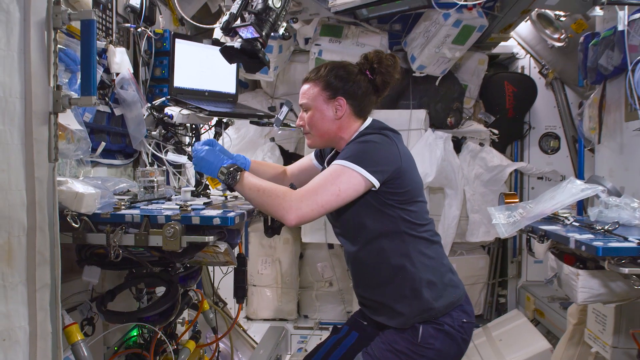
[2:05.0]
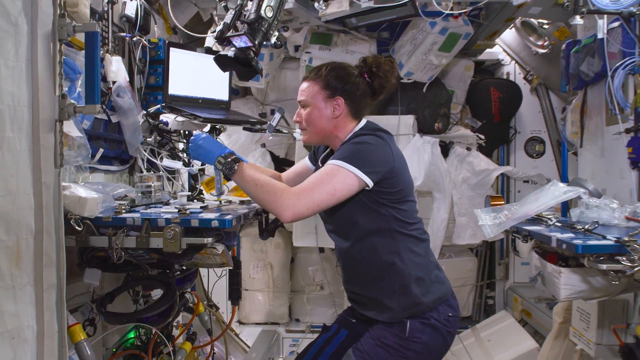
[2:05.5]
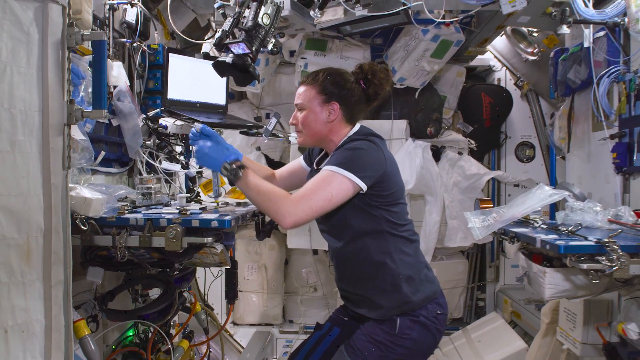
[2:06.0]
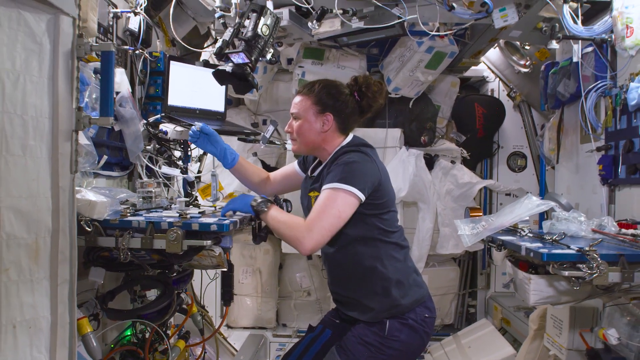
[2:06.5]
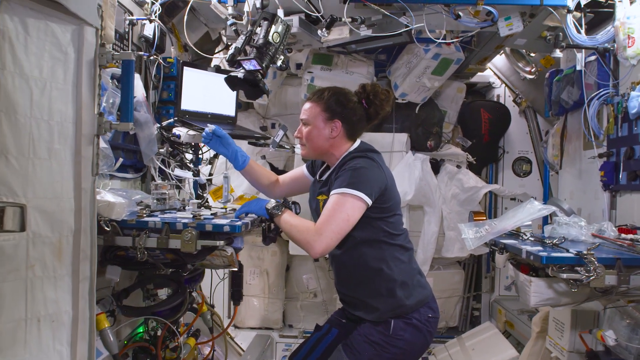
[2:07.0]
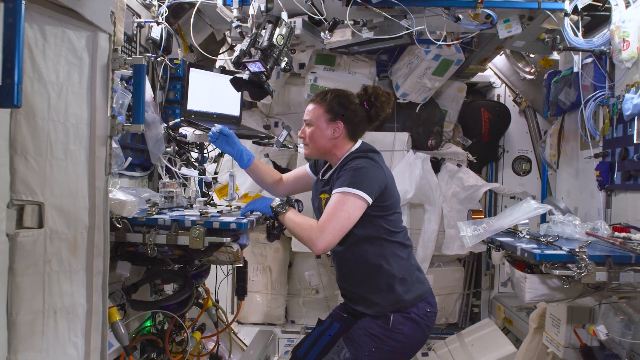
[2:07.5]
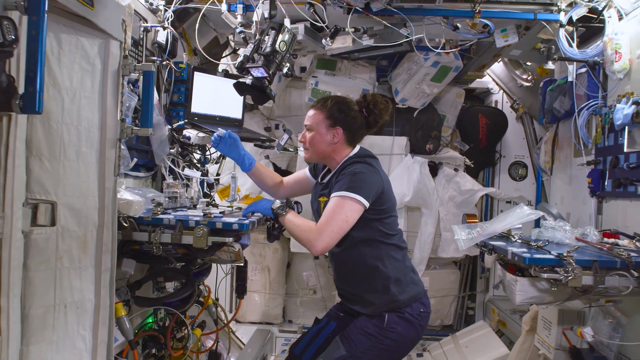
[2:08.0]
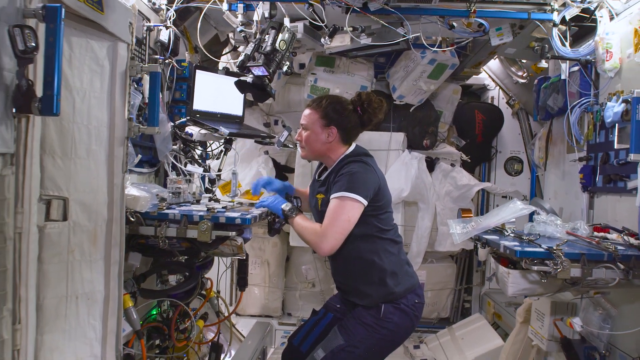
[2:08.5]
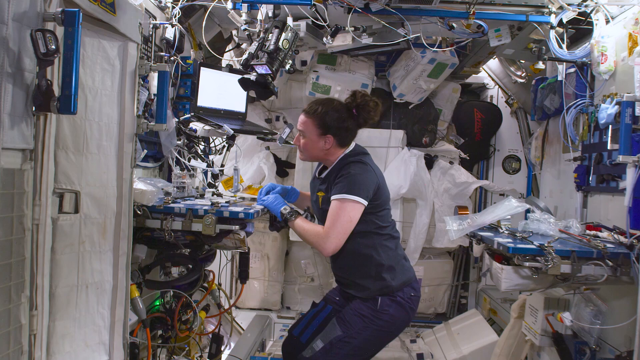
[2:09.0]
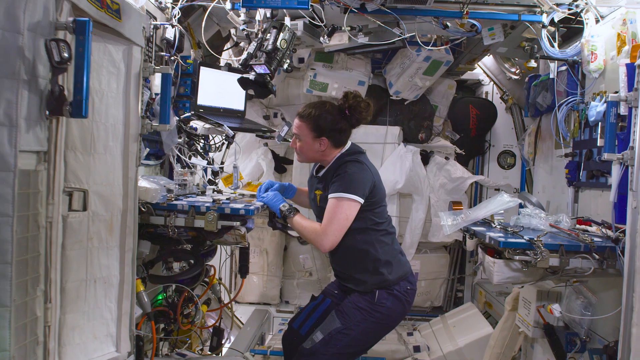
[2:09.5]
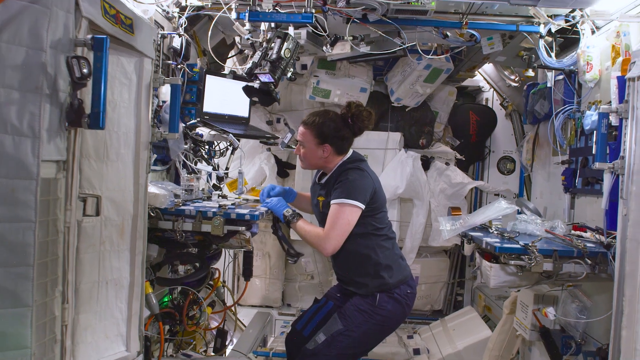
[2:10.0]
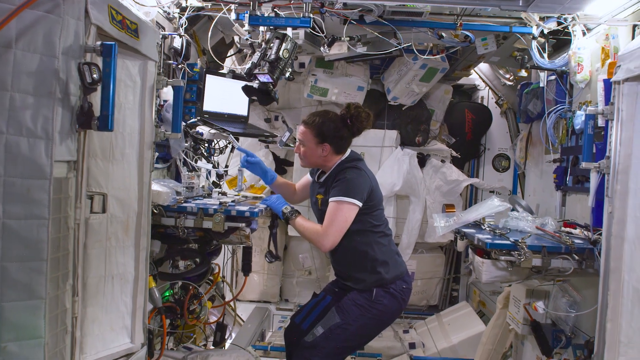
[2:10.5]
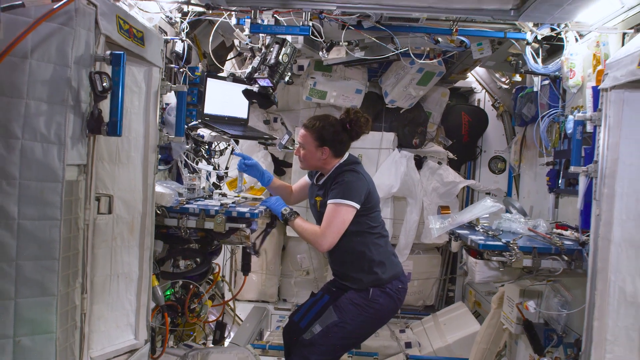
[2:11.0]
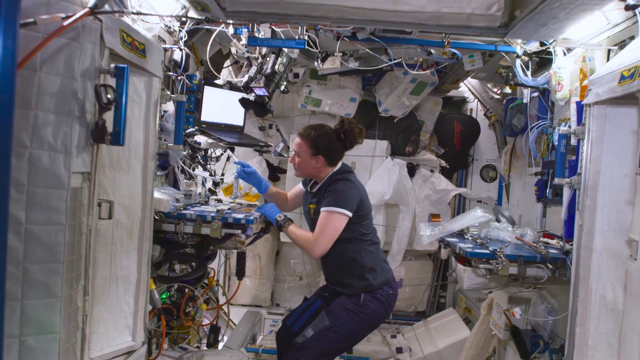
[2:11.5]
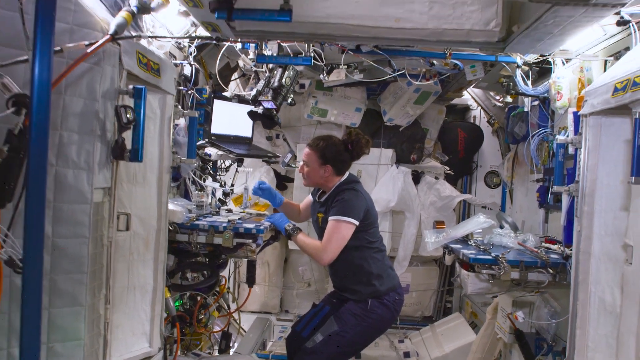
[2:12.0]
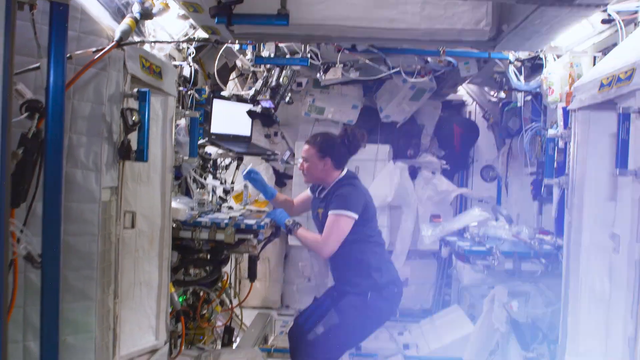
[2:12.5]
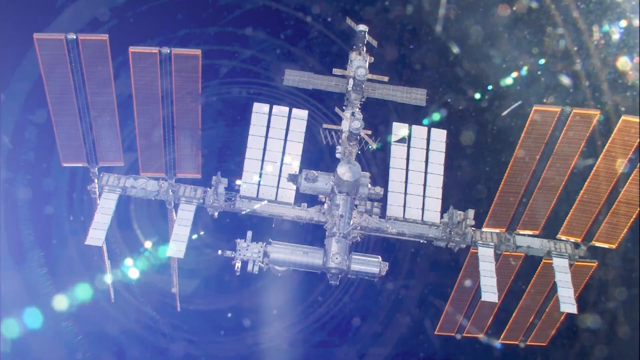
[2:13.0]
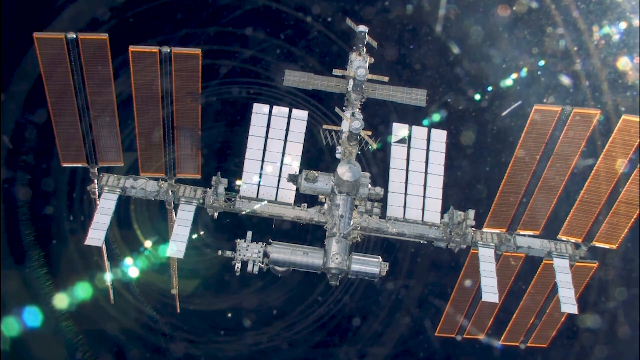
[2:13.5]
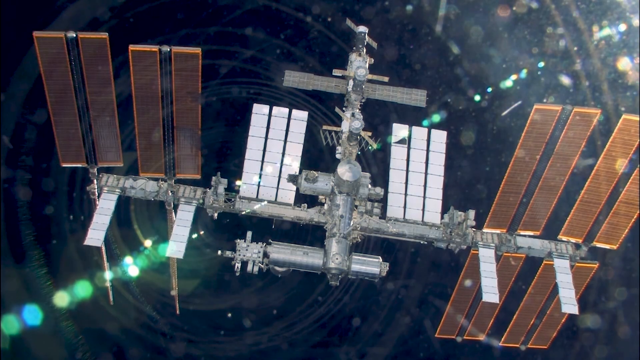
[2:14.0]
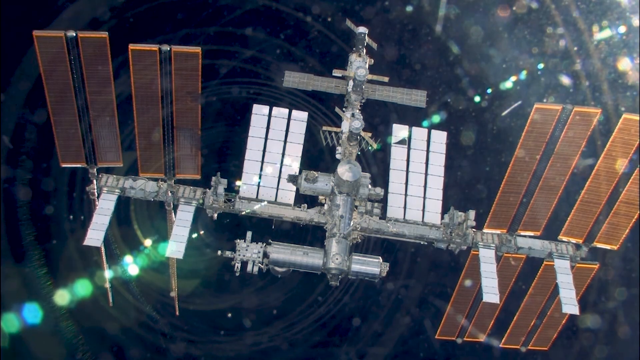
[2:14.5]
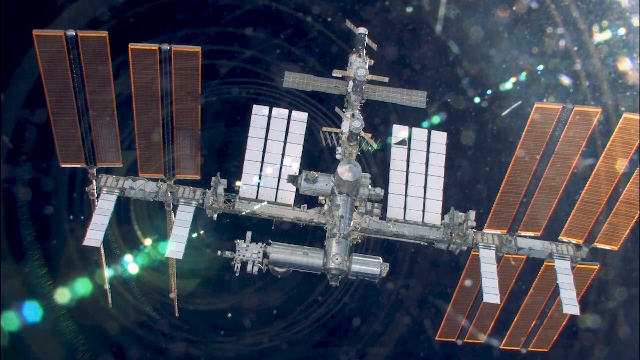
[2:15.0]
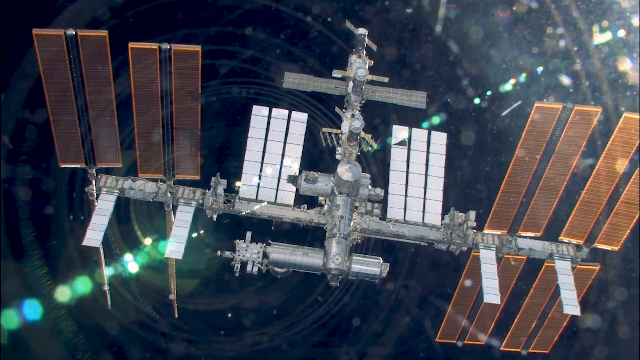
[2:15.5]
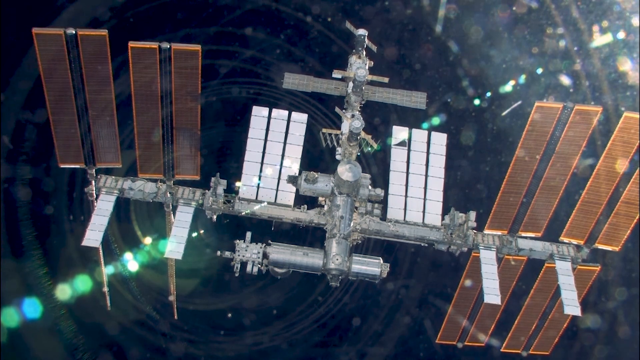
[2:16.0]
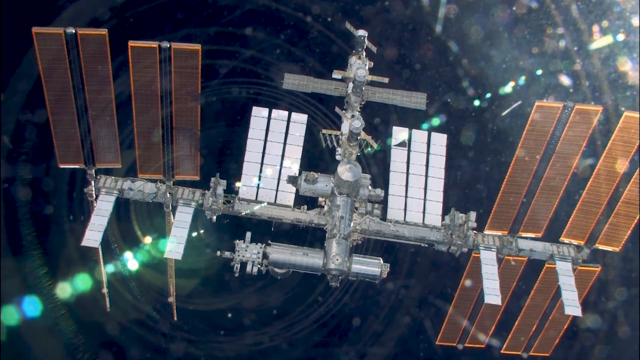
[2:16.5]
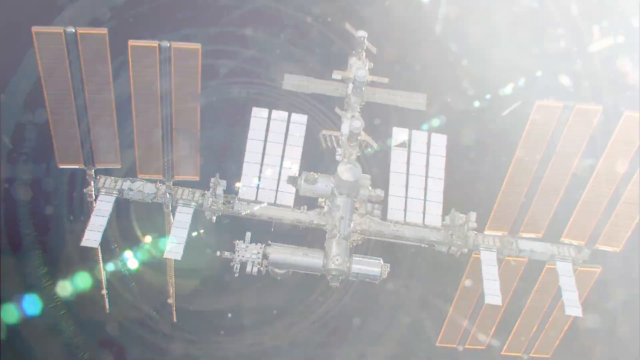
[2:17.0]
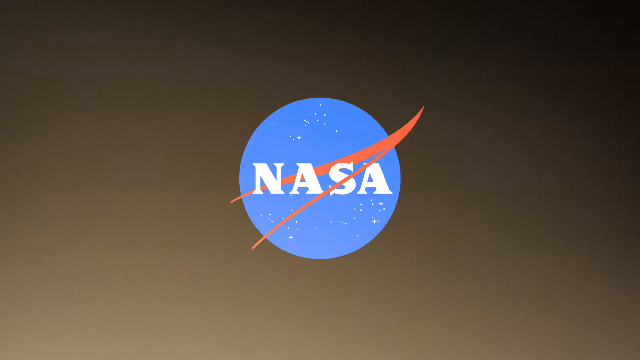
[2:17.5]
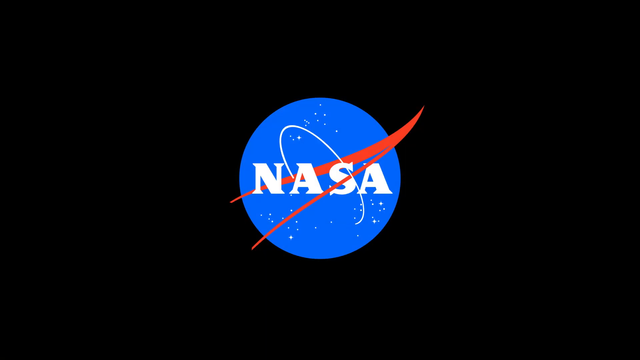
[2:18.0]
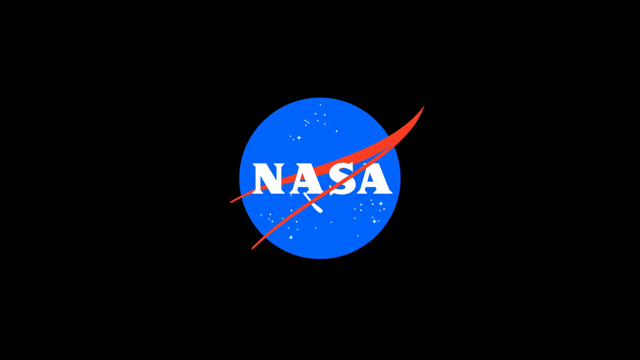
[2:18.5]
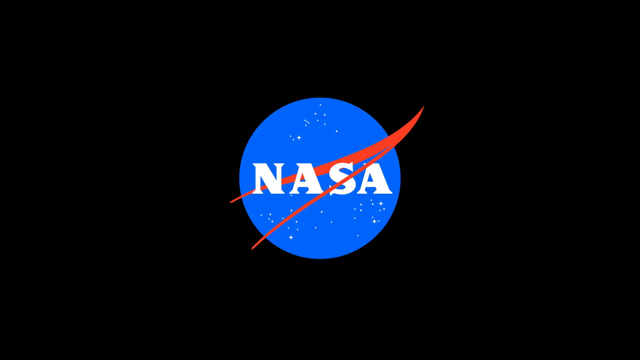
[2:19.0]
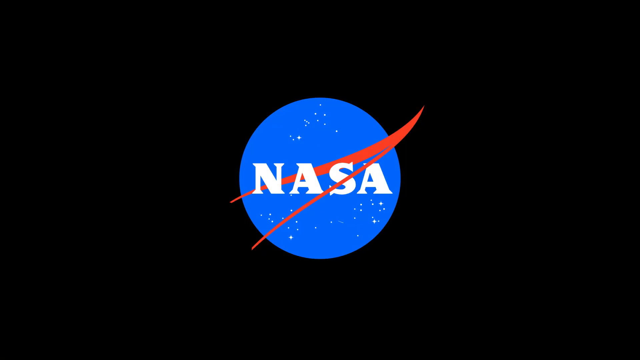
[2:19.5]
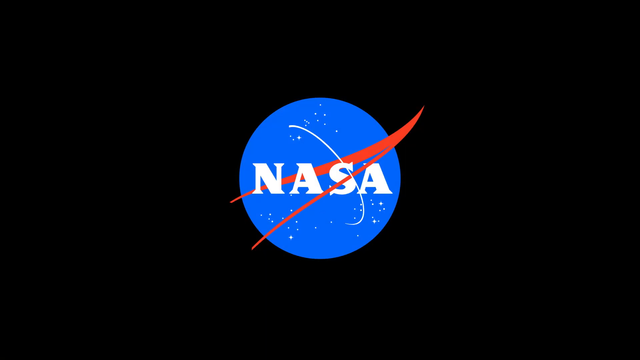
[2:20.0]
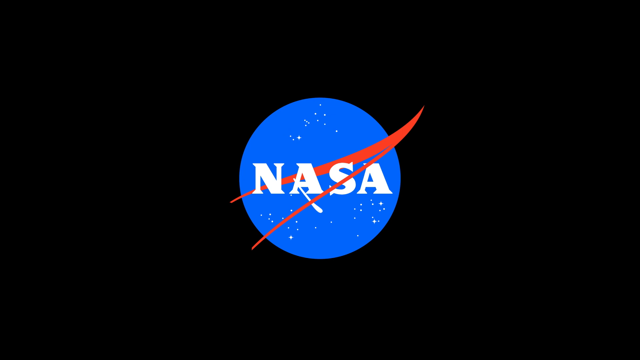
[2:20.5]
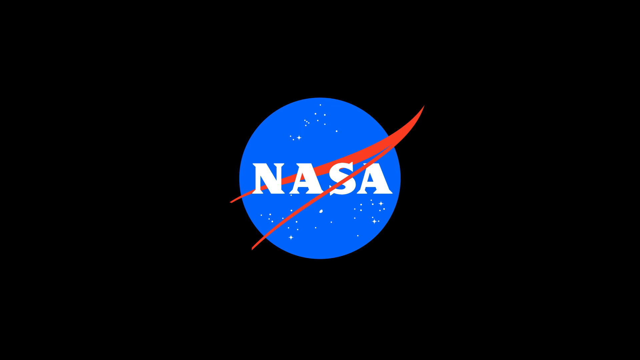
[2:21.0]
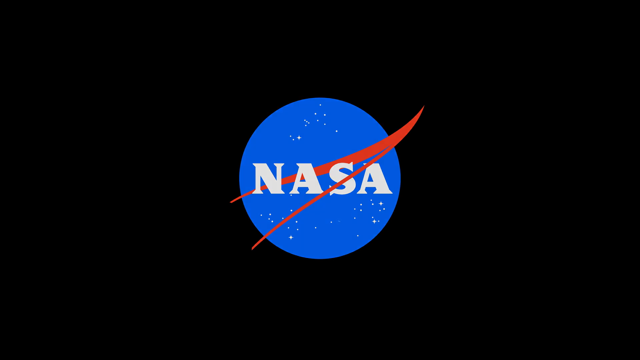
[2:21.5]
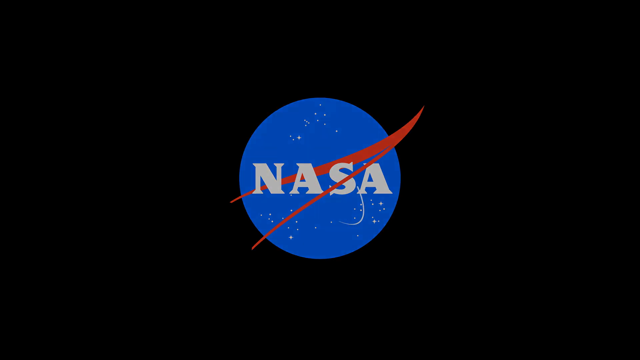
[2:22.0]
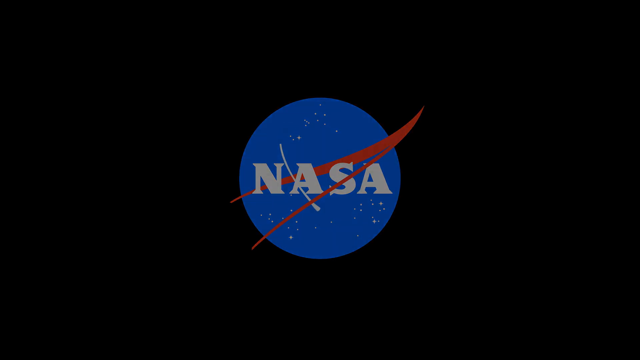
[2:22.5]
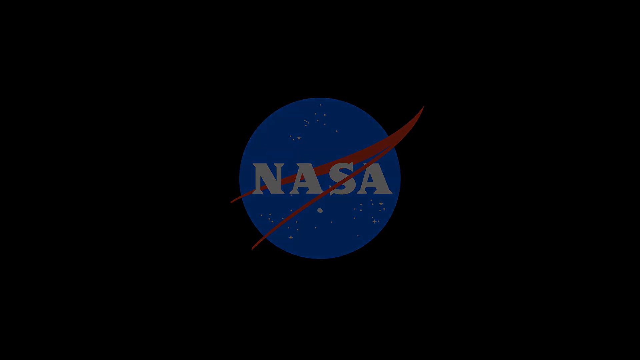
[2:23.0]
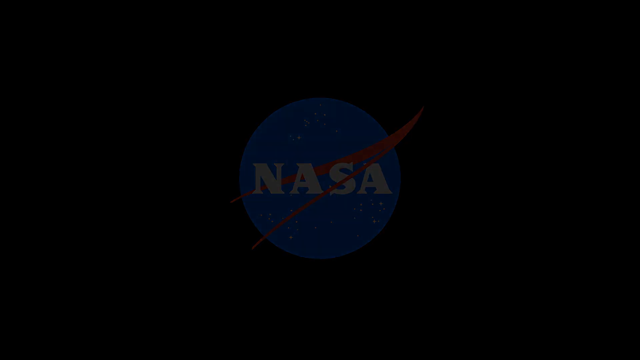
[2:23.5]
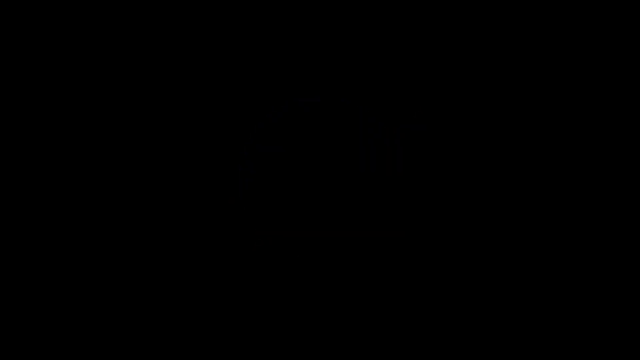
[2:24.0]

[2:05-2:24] The focus is a female astronaut in a dark gray shirt and blue pants, with a couple of watches on her wrist, blue medical-style gloves, and her hair tied back in a ponytail. She is sitting with medical-style equipment cluttered behind her and a laptop in front of her, working on an experiment. She holds out a piece of equipment, pulls her hand back, and it floats in front of her; she touches it and it flips around. A view pulled out from the space station follows, seen from a little distance in space. The video then cuts to the blue and white NASA logo on a black background, with a motion graphic effect of a star looping around it.